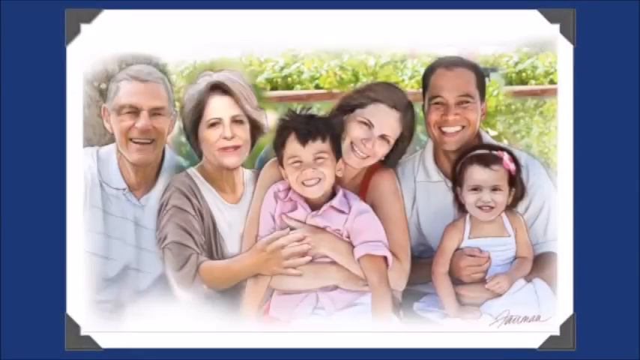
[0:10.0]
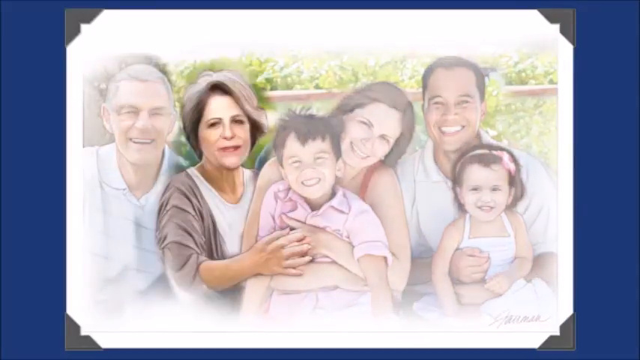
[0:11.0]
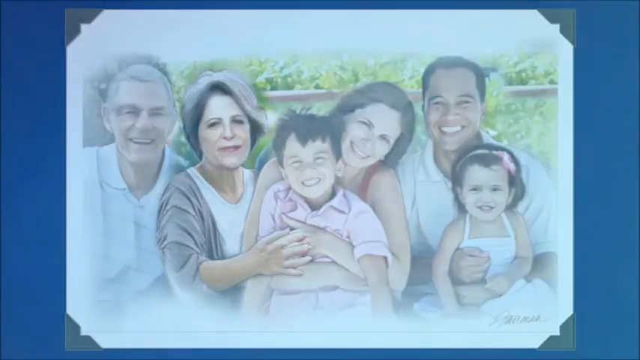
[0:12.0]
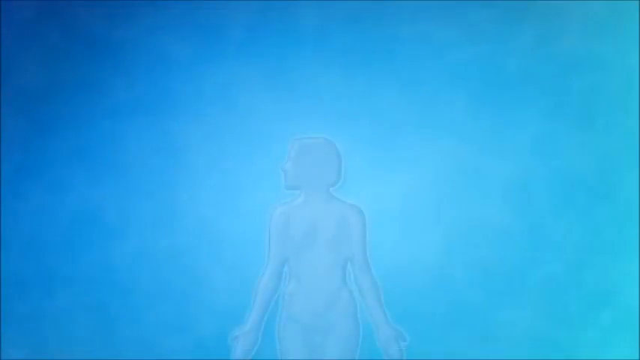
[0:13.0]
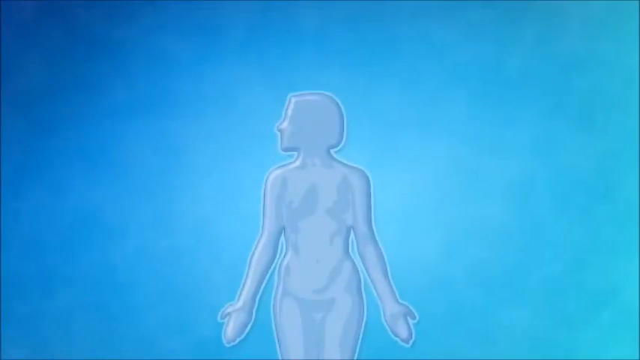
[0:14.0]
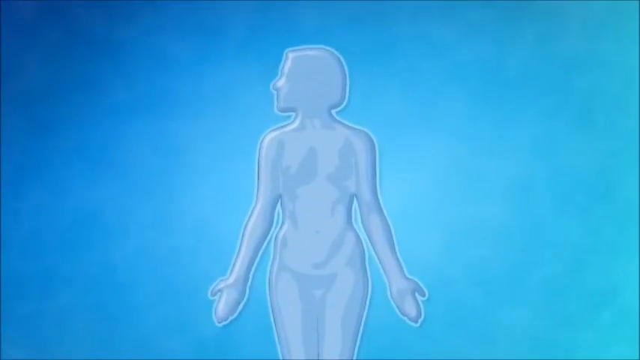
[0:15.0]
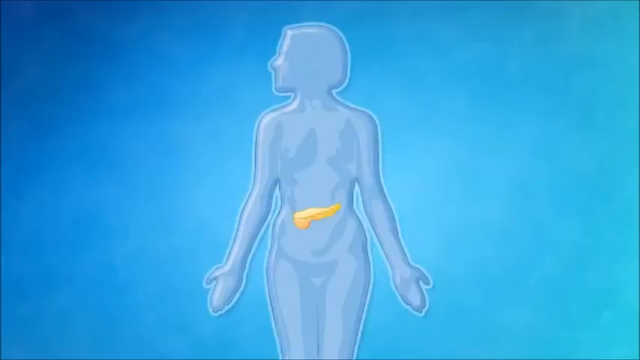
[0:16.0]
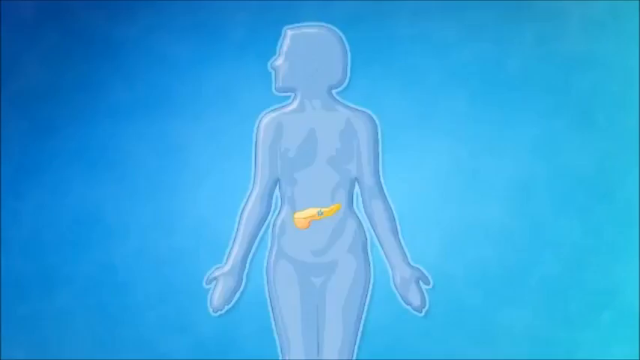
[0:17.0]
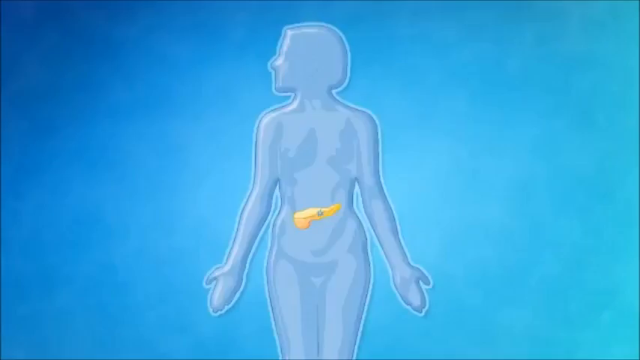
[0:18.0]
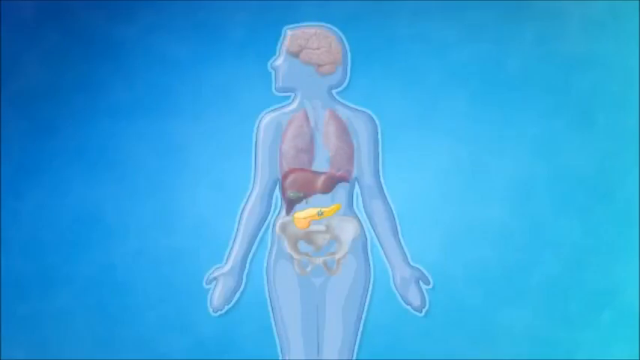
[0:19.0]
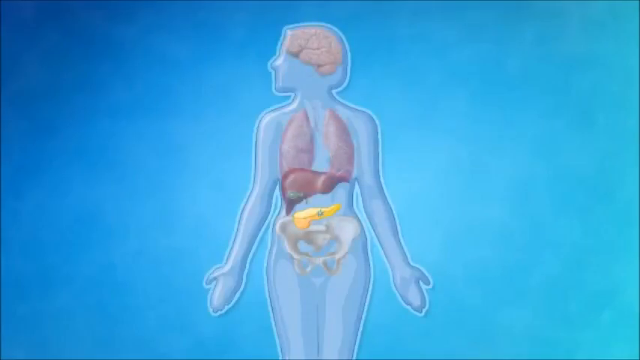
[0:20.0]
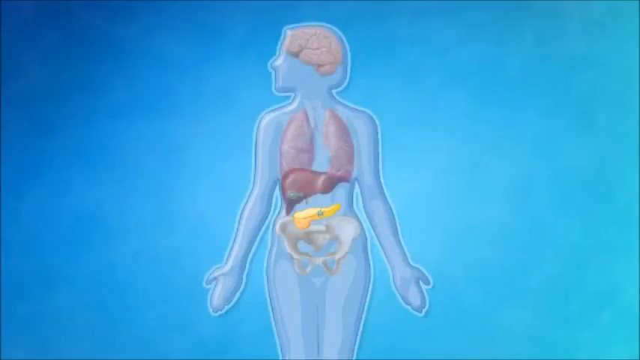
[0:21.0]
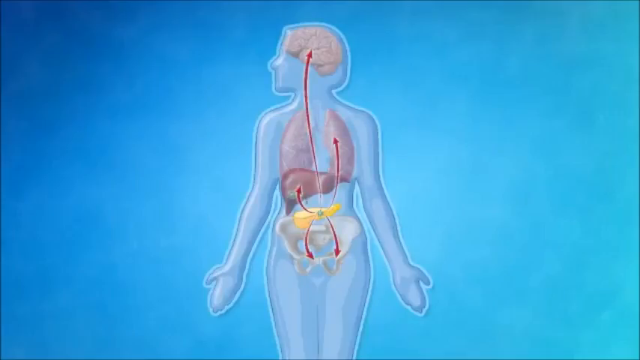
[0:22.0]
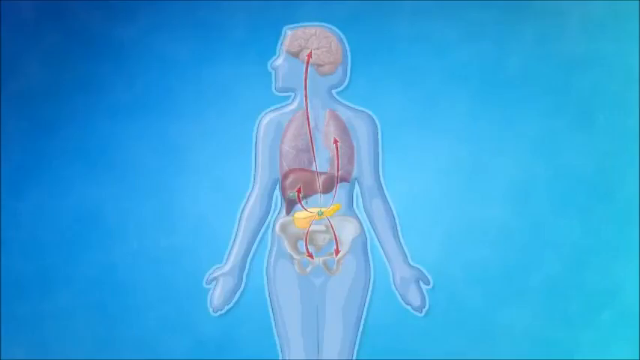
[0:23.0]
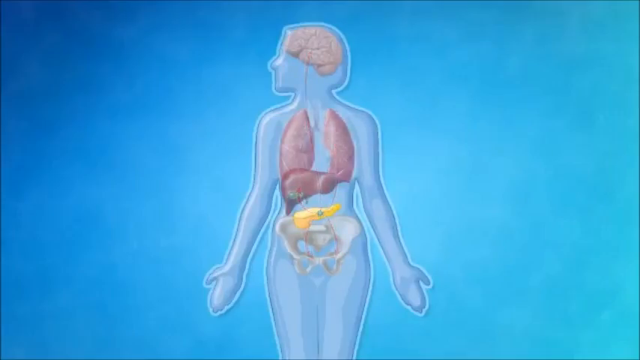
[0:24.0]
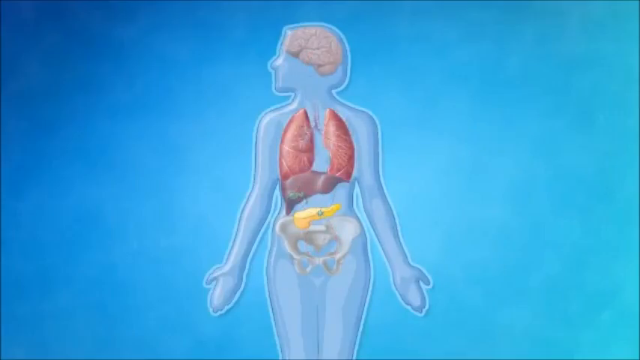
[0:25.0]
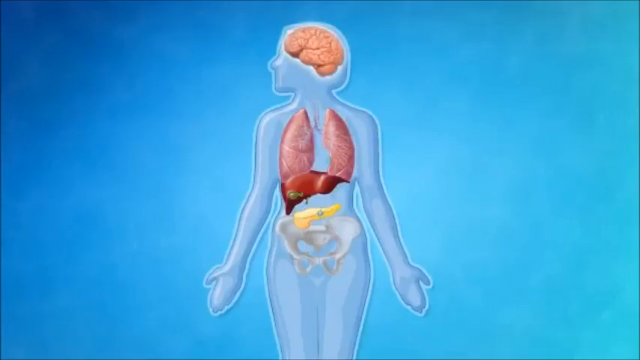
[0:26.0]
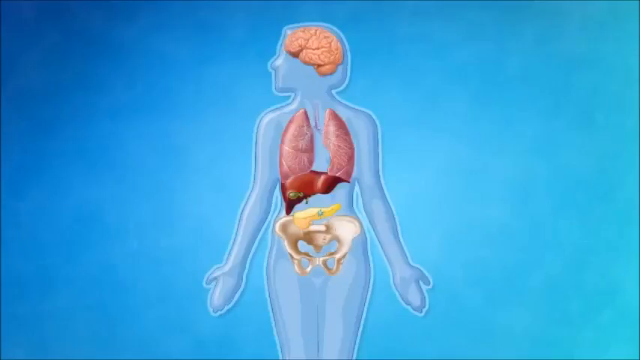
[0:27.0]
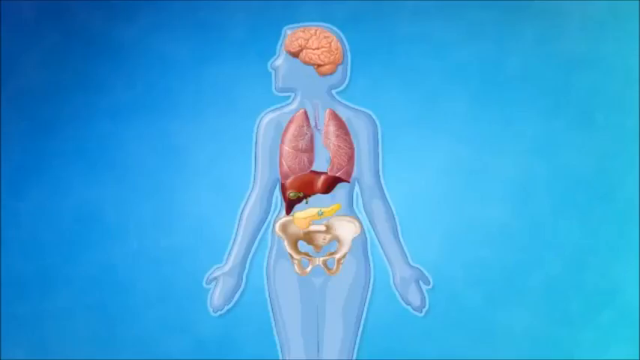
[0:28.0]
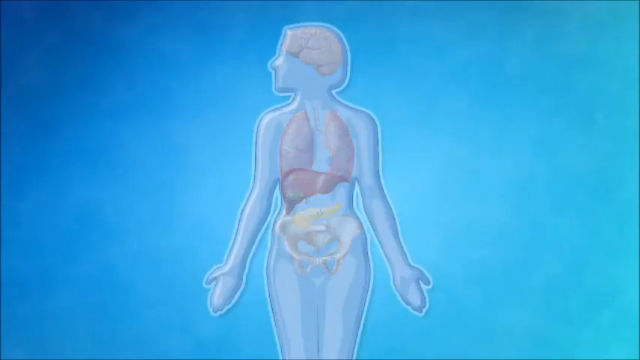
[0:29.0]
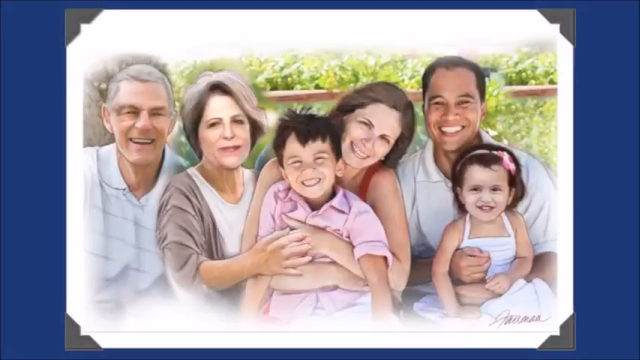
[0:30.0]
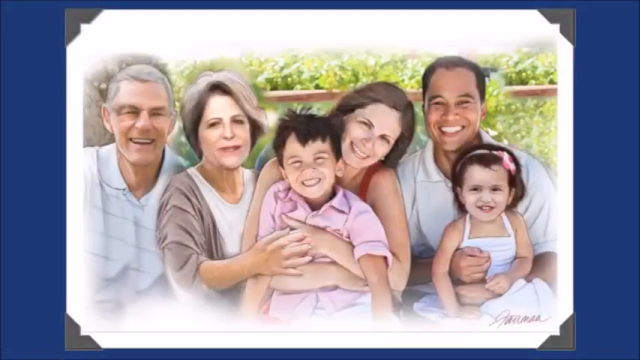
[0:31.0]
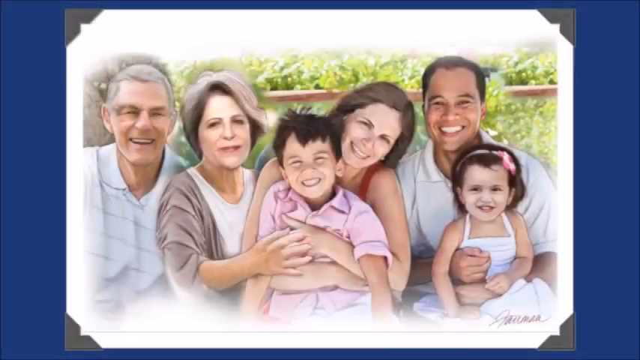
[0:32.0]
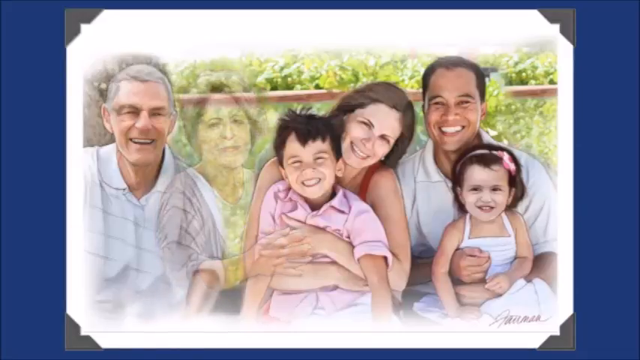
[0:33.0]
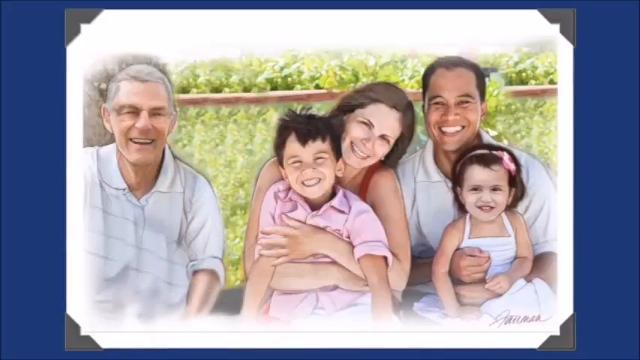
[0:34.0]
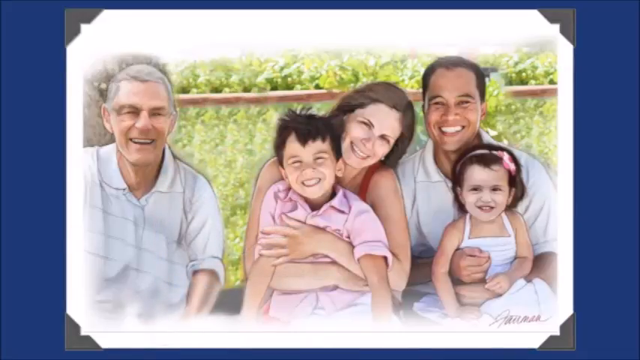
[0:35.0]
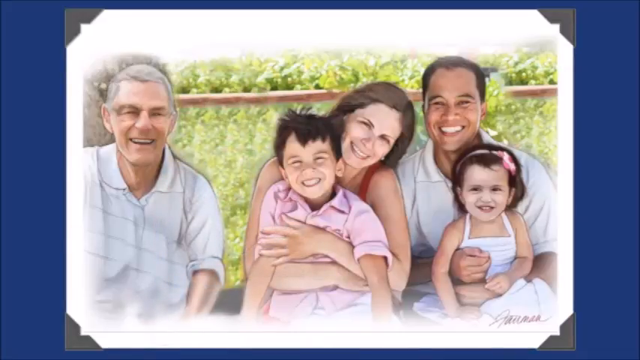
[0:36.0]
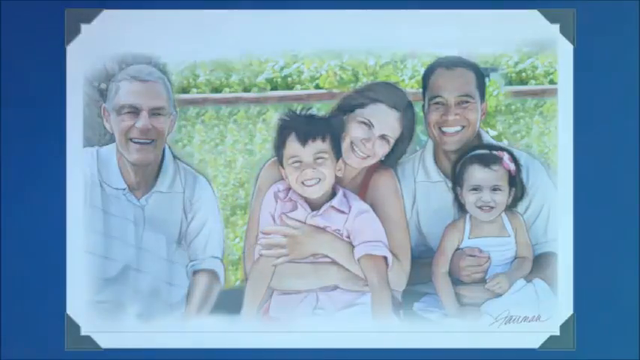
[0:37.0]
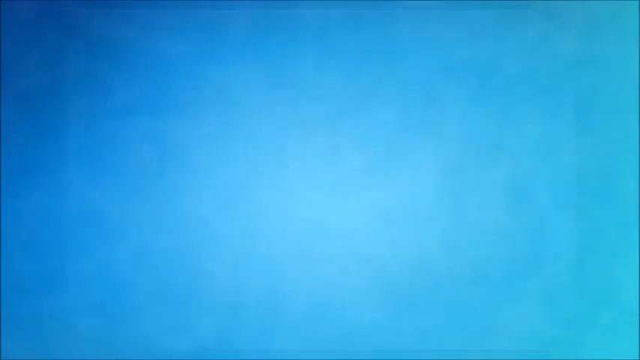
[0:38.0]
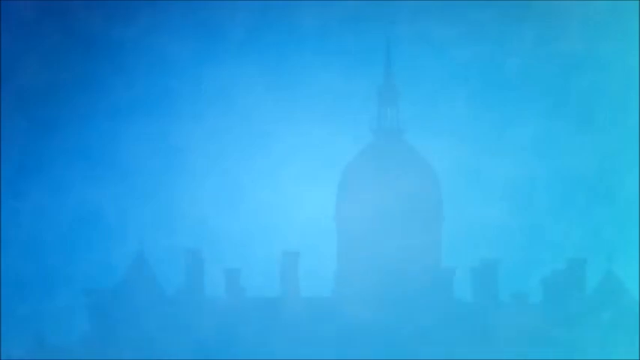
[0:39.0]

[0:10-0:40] A large photograph is centered on a dark blue background. It has a white border and a black corner cap on each corner. The photo has a filter that makes it look partially drawn, like colored pencil, though it is clearly a real photograph. A grandmother and grandfather are on the left side, and on the right side are the mother, father and two small children, a little boy and a little girl. The mother is holding the little boy. They are all looking at the camera and smiling. The photo fades and the screen transitions to the inside of a woman's body; judging by the hair and head shape, it looks like the grandmother. The body is transparent light blue, and colored organs start appearing: the brain, the heart, the lungs, the stomach and the pancreas. The screen transitions back to the photo, and the grandmother has disappeared from it, leaving a blank space where she was, between the grandfather and the mother, father and children.